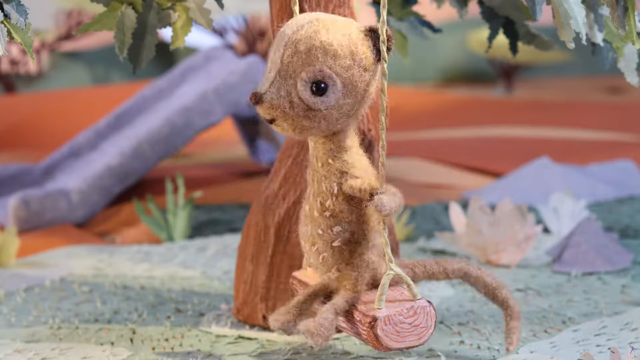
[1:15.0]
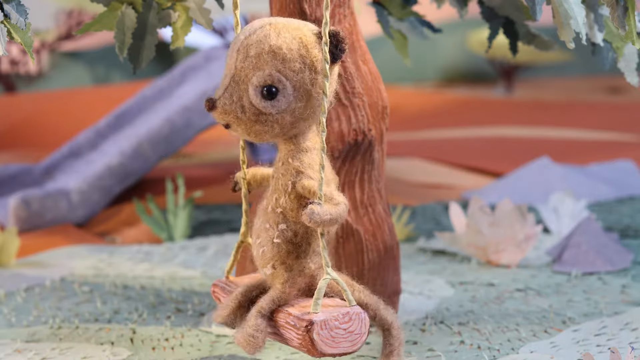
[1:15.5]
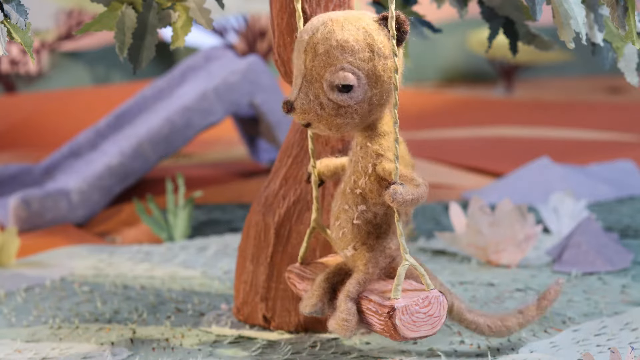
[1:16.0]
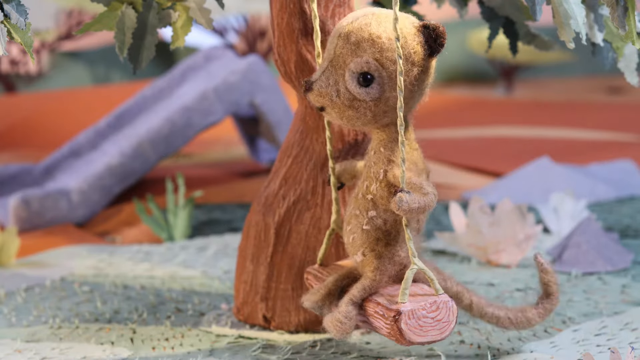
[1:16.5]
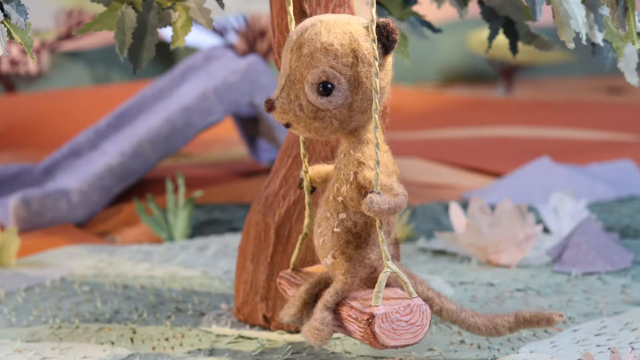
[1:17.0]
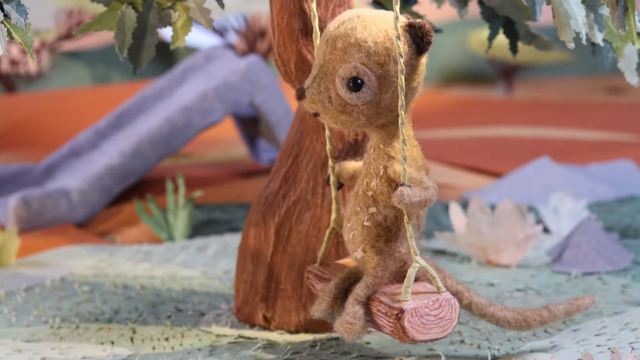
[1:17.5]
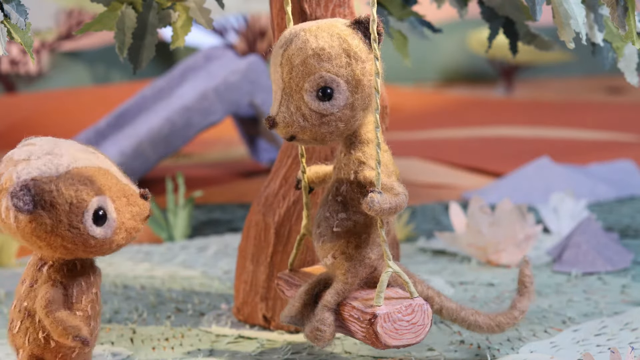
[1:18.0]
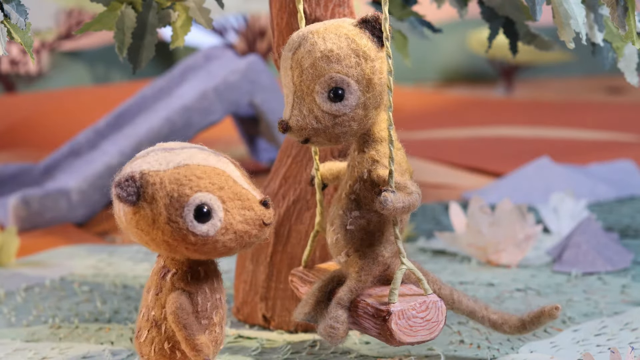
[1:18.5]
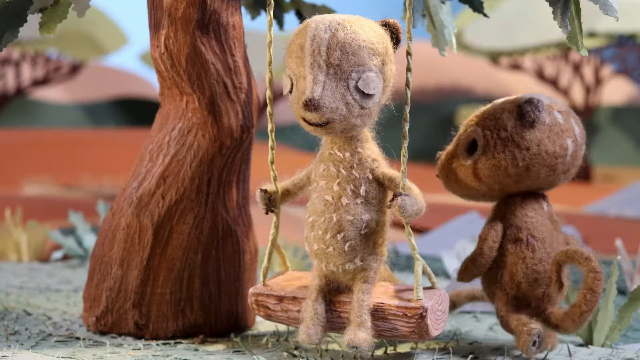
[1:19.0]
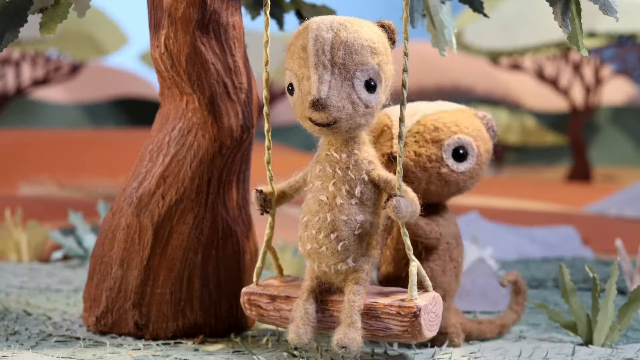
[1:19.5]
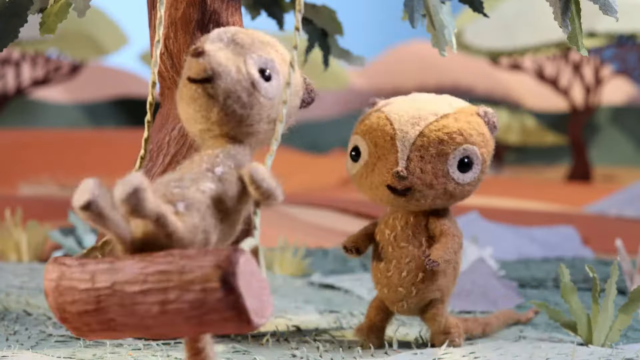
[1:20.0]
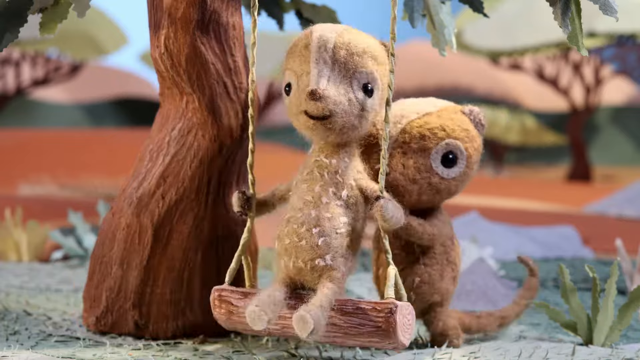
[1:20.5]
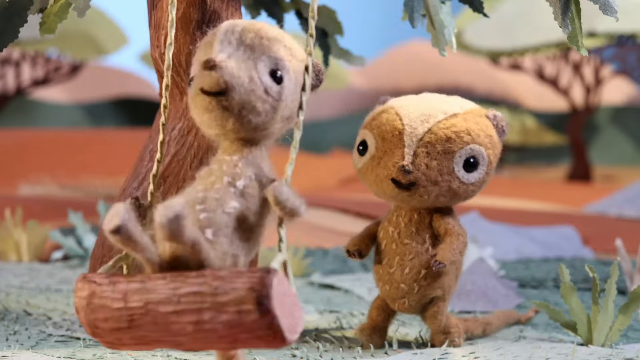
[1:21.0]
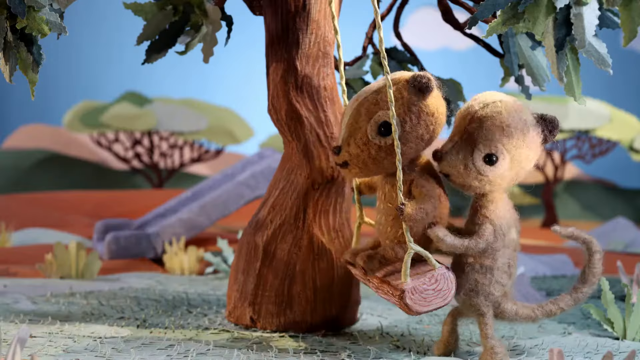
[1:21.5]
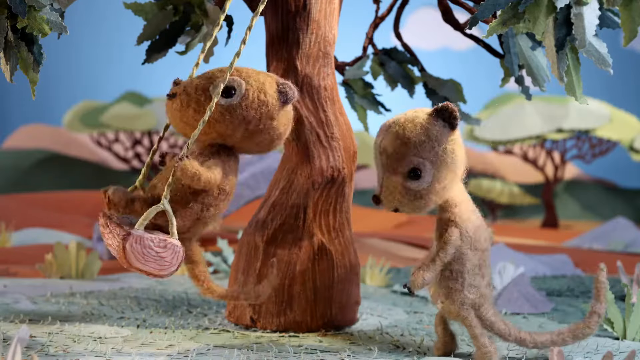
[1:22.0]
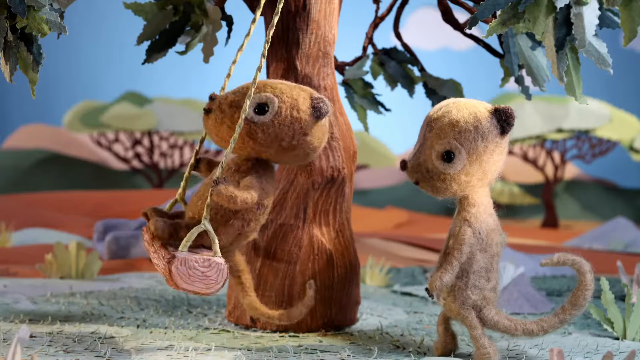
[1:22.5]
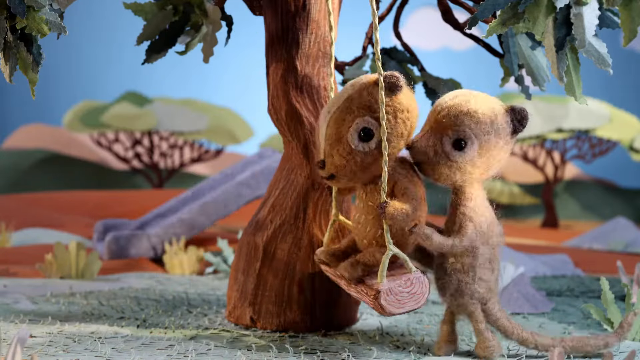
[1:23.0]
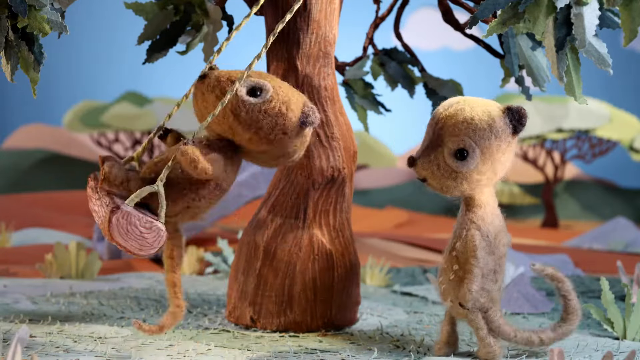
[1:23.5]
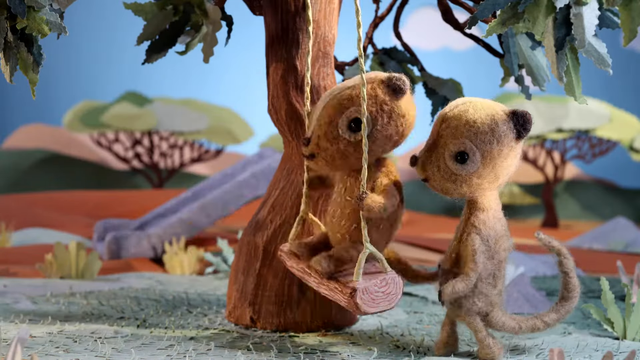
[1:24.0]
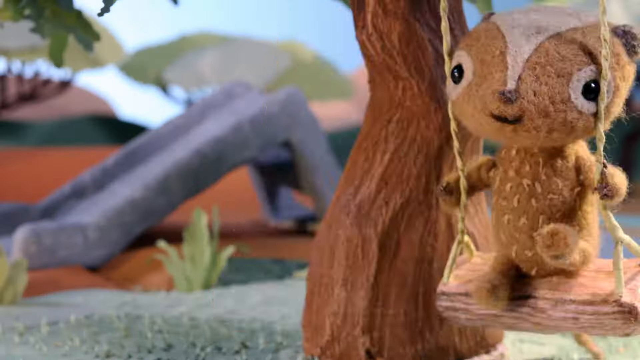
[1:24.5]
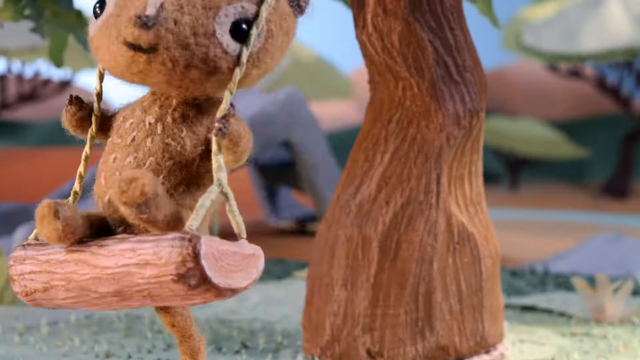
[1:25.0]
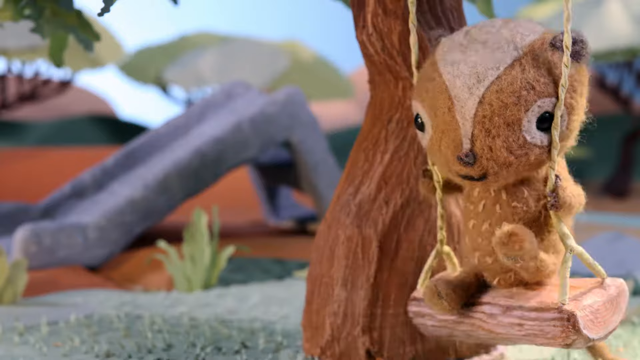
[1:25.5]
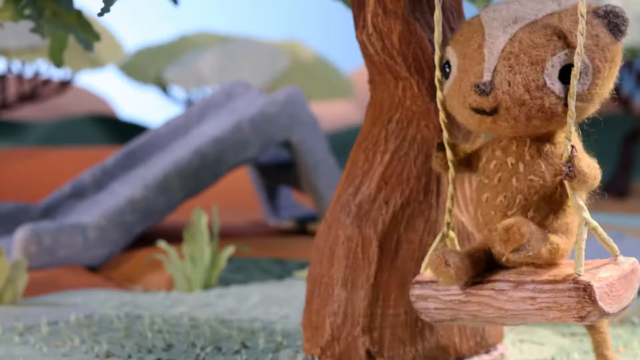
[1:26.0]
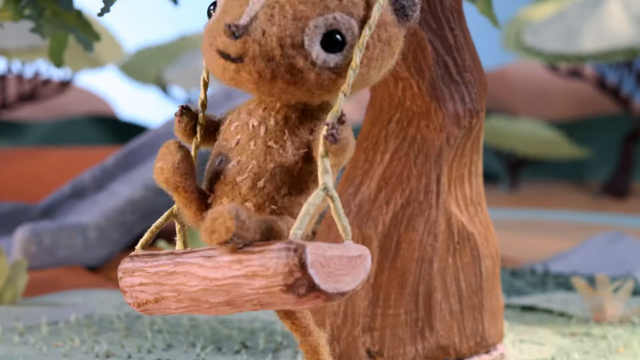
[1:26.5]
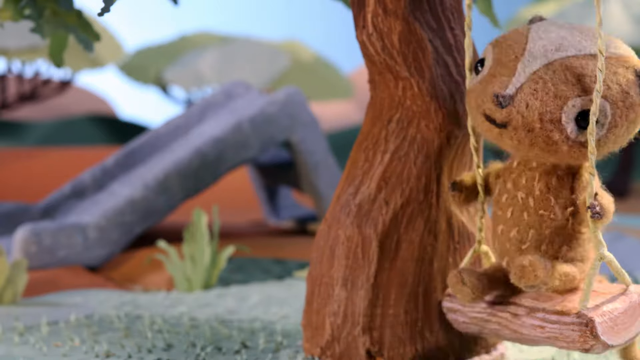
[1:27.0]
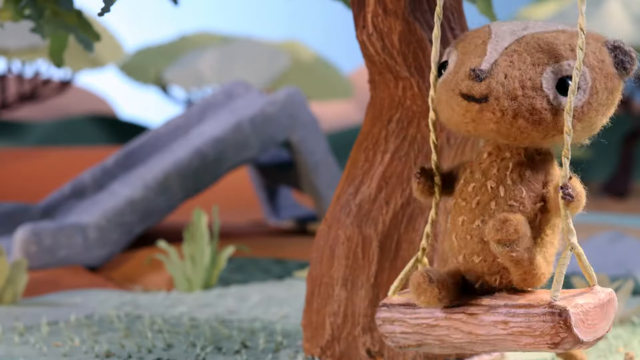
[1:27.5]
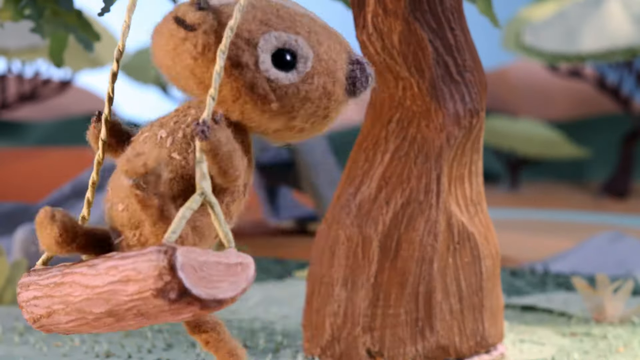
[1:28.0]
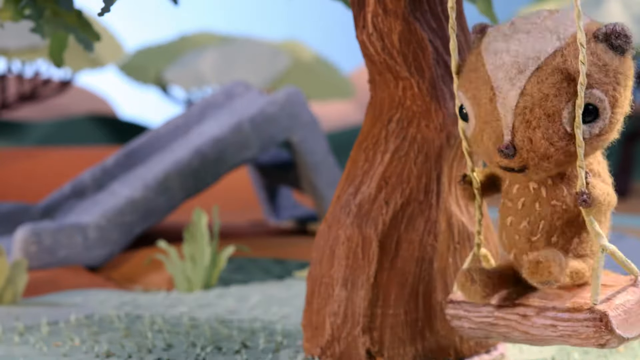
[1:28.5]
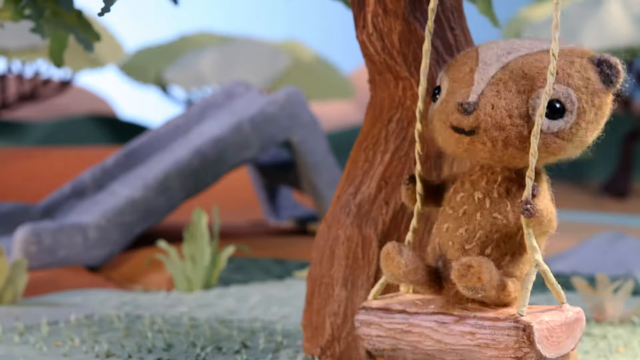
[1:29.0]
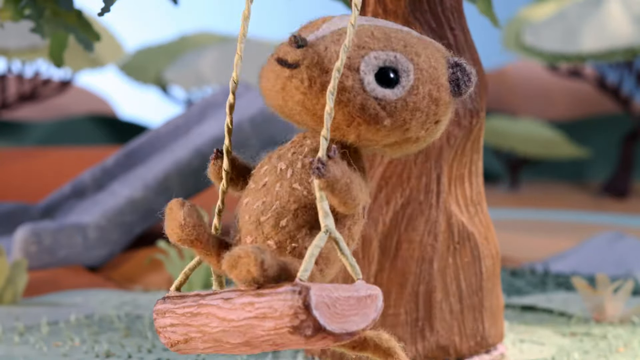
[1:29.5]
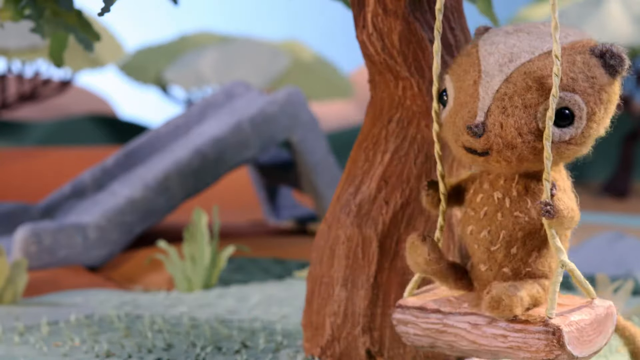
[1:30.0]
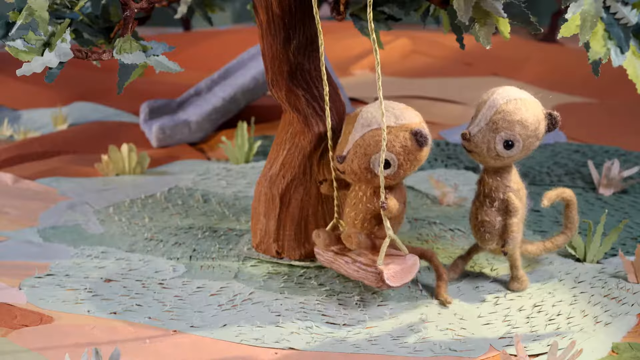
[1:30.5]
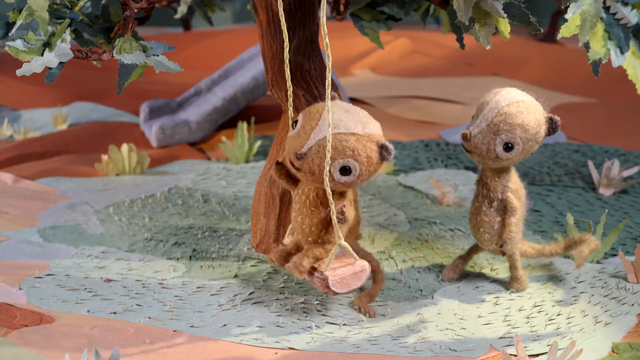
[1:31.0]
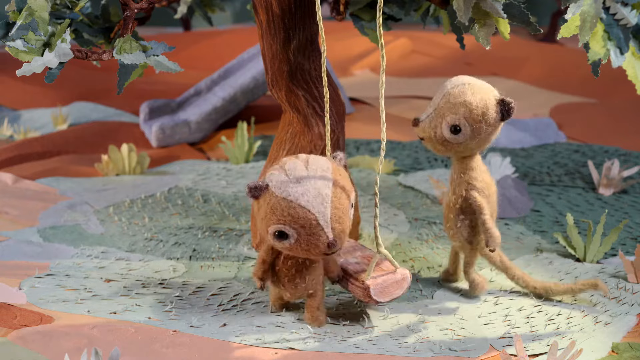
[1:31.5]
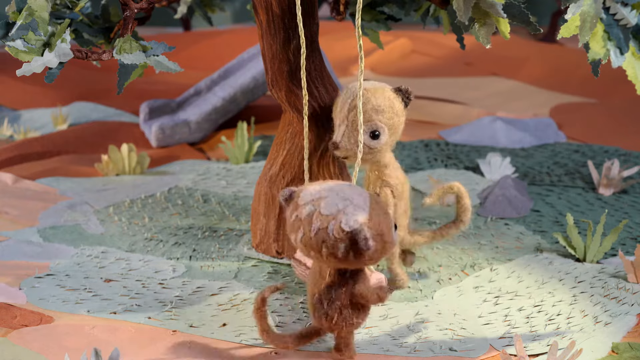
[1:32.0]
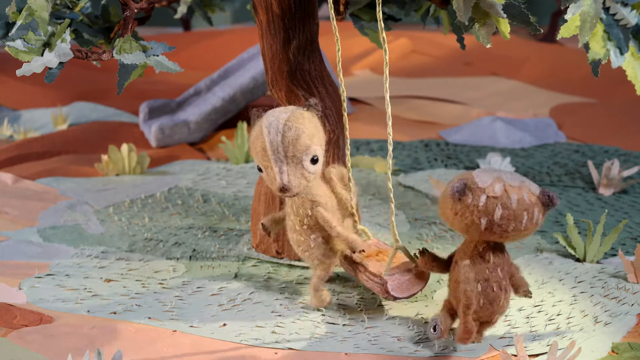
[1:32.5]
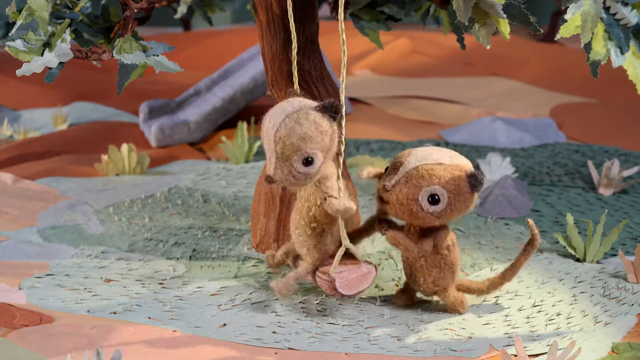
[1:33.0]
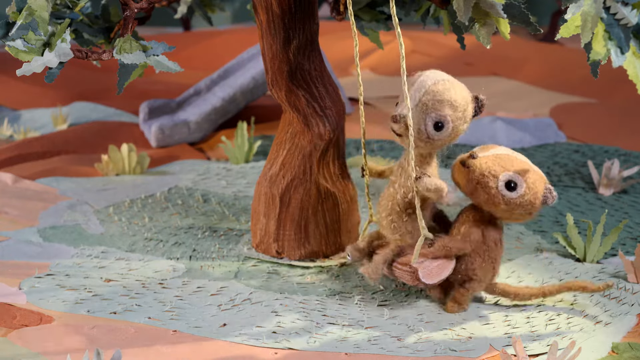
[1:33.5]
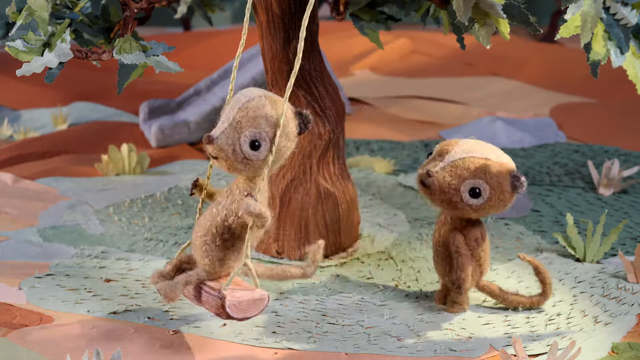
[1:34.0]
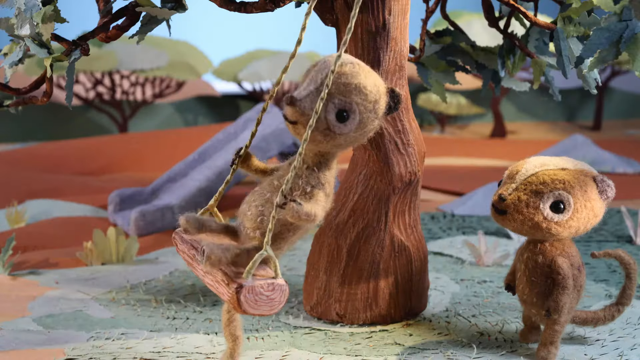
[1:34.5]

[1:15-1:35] An animated chipmunk sits on a swing hanging from a tree, swinging back and forth. A smaller animated chipmunk walks up, gets behind him and pushes him higher and higher. They then switch spots, and the smaller chipmunk sits on the swing while the other pushes him higher and higher. They smile and are having fun together. A gray slide is in the background, along with various flowers growing out of the ground and a few plants, some yellow and some green. They keep taking turns getting off and back on the swing and pushing each other, and the shot finishes with the larger chipmunk on the swing.